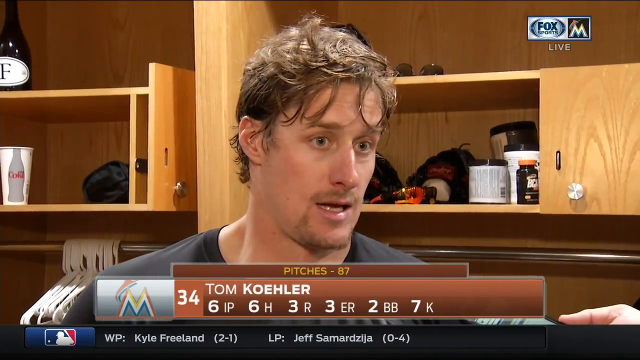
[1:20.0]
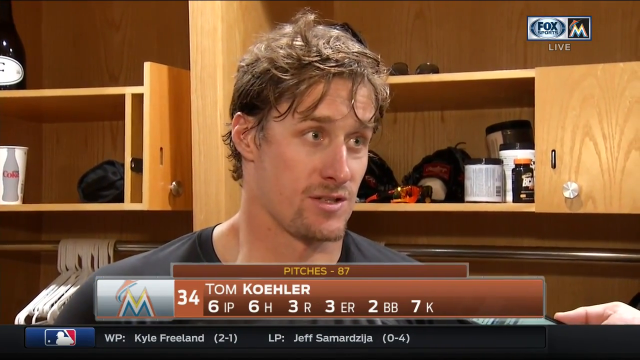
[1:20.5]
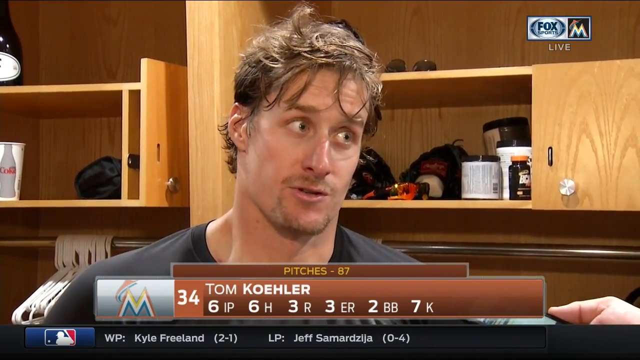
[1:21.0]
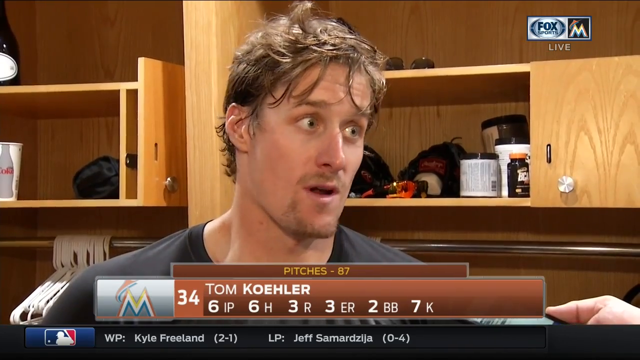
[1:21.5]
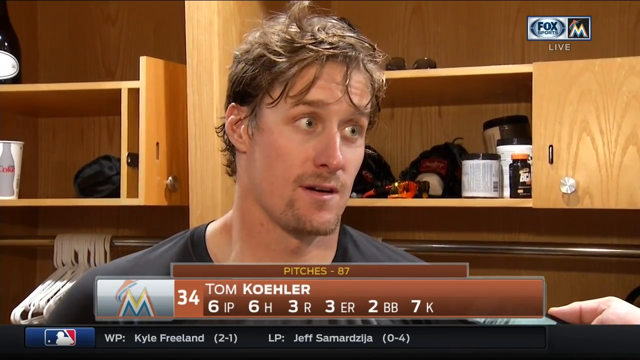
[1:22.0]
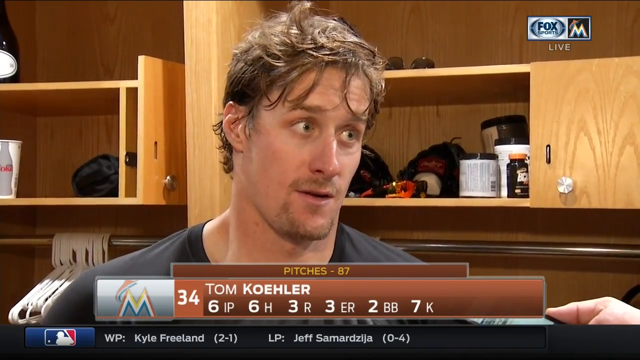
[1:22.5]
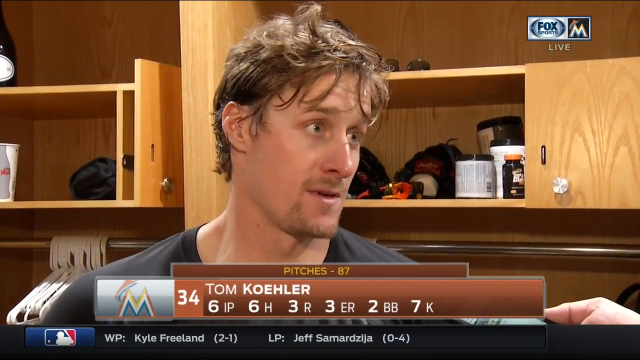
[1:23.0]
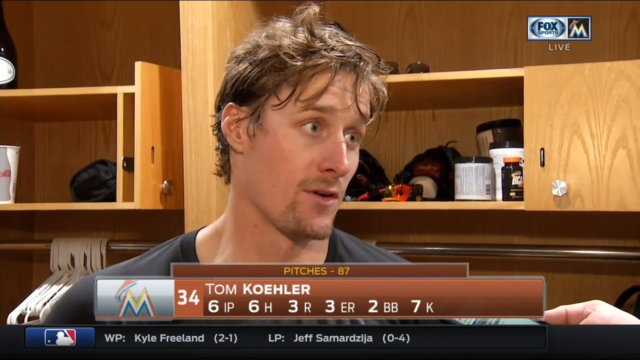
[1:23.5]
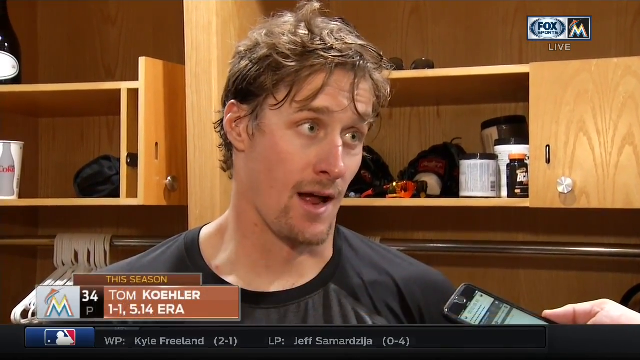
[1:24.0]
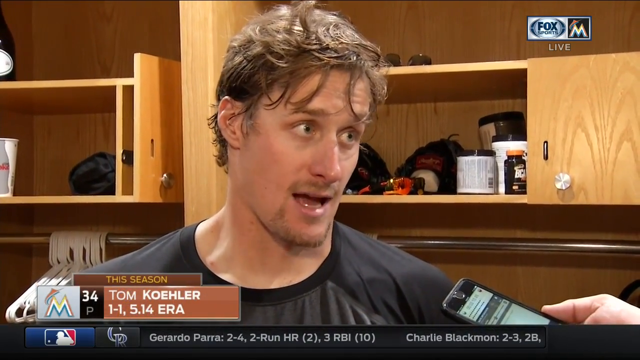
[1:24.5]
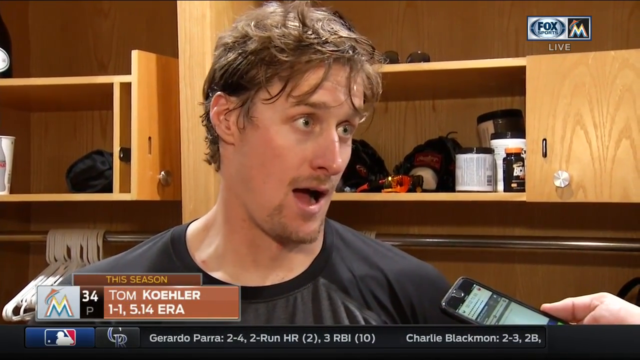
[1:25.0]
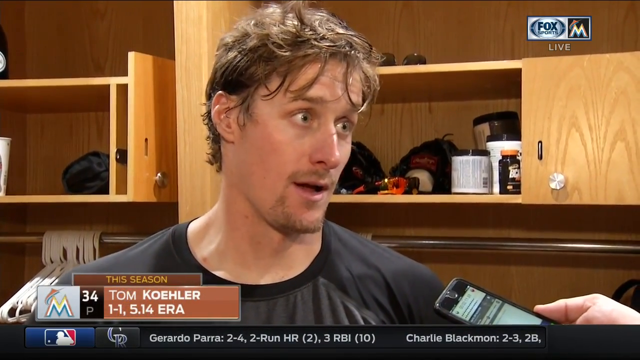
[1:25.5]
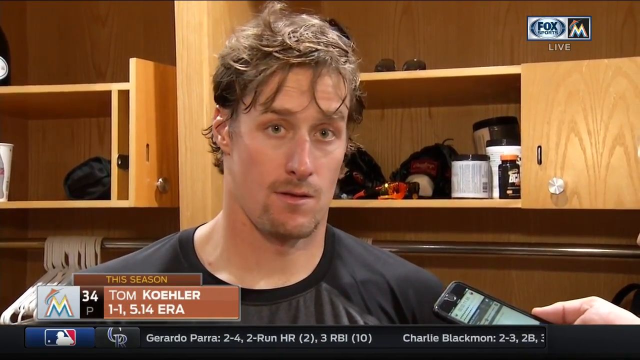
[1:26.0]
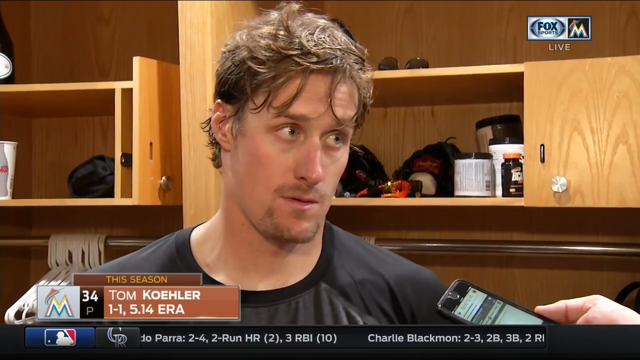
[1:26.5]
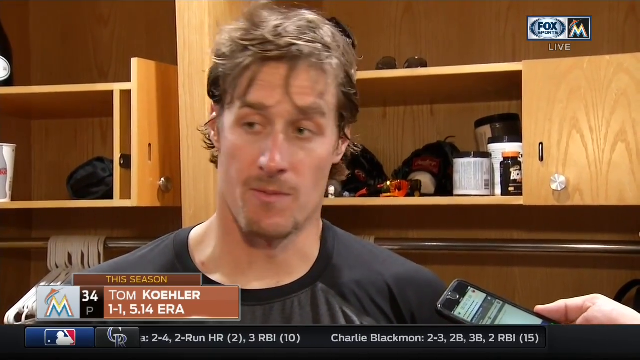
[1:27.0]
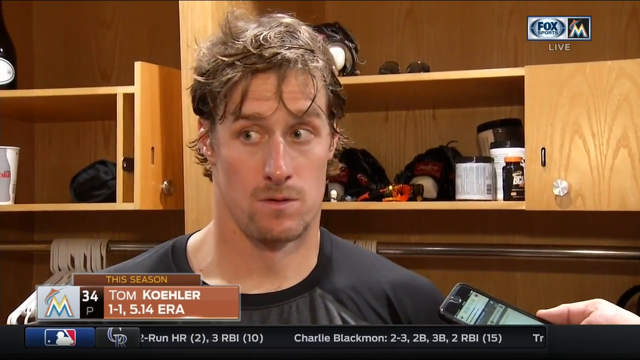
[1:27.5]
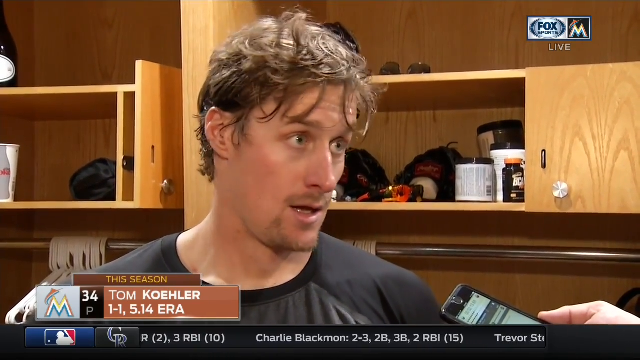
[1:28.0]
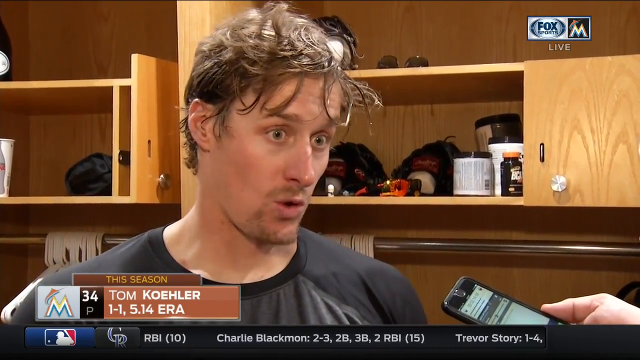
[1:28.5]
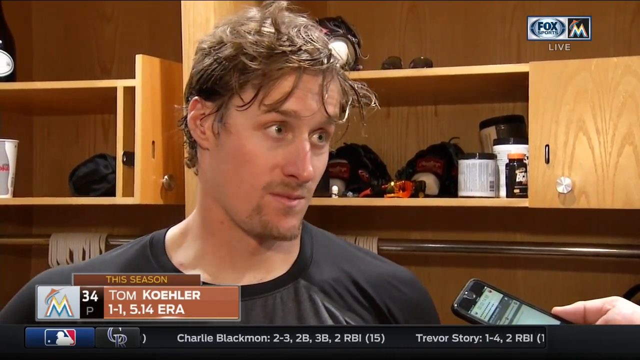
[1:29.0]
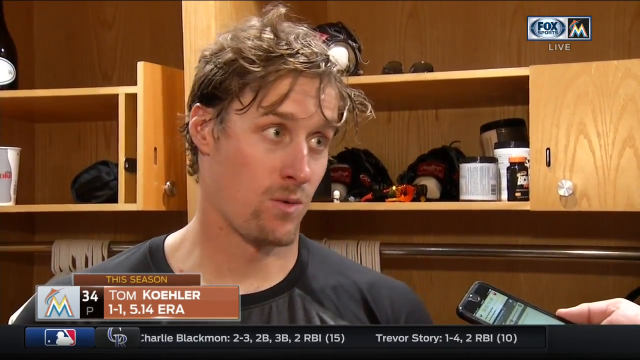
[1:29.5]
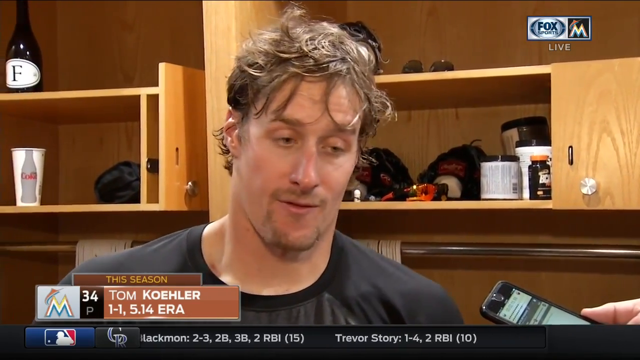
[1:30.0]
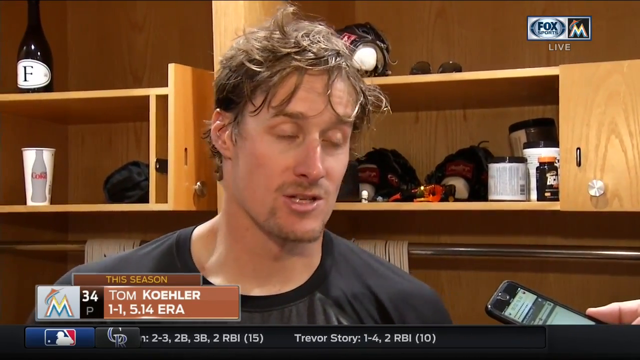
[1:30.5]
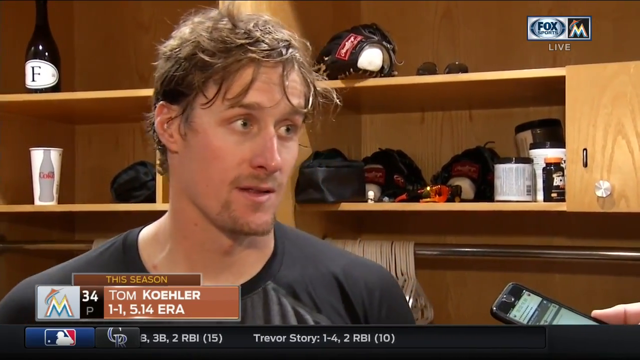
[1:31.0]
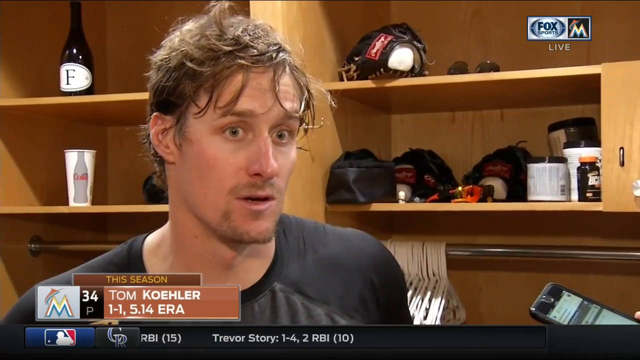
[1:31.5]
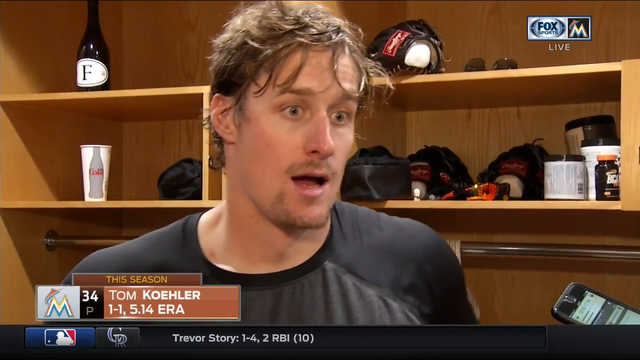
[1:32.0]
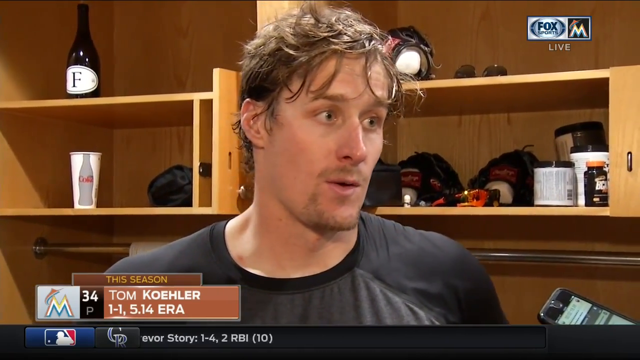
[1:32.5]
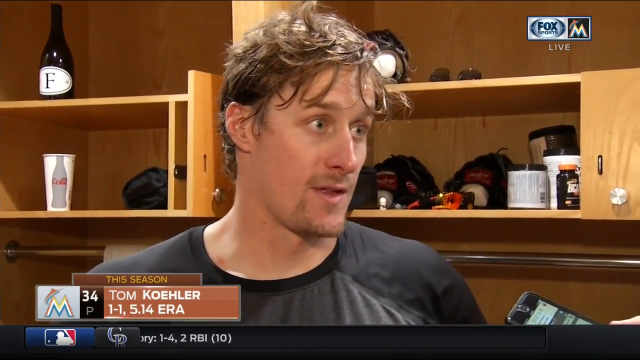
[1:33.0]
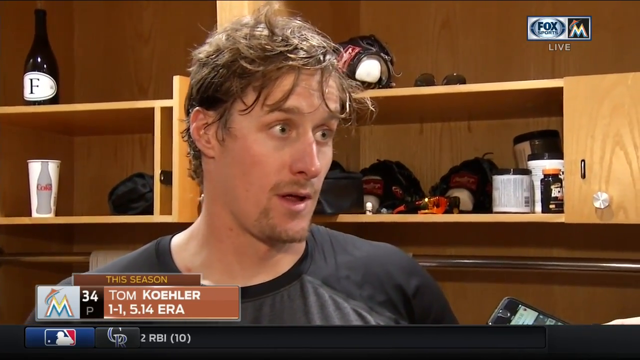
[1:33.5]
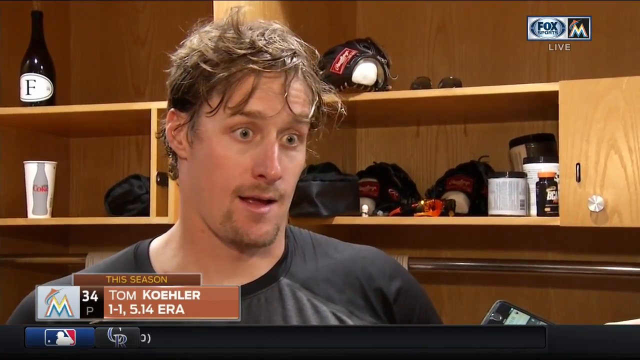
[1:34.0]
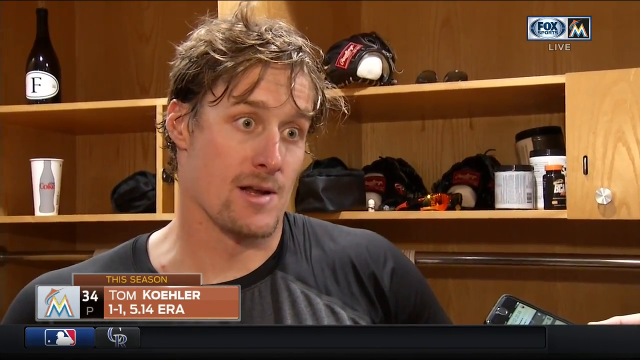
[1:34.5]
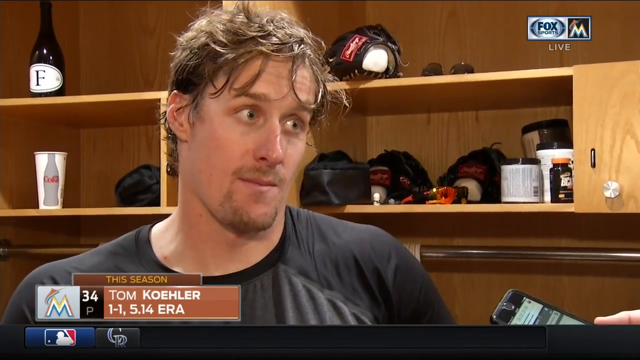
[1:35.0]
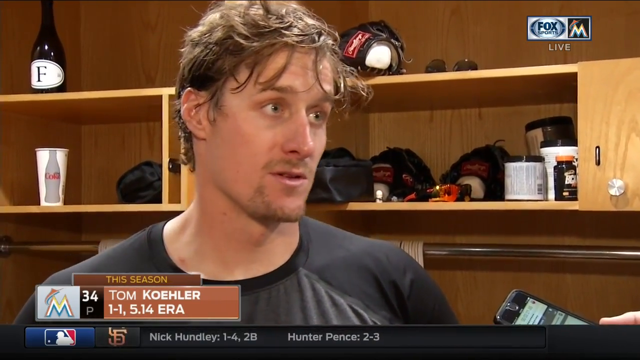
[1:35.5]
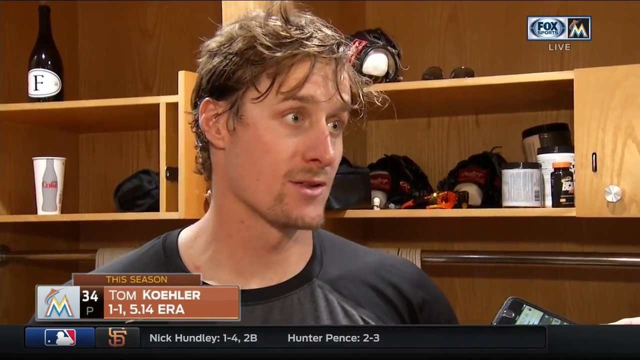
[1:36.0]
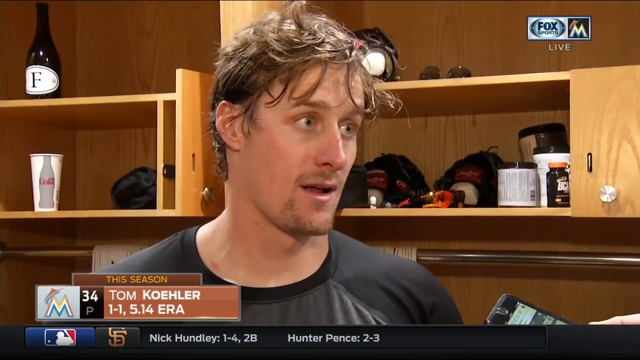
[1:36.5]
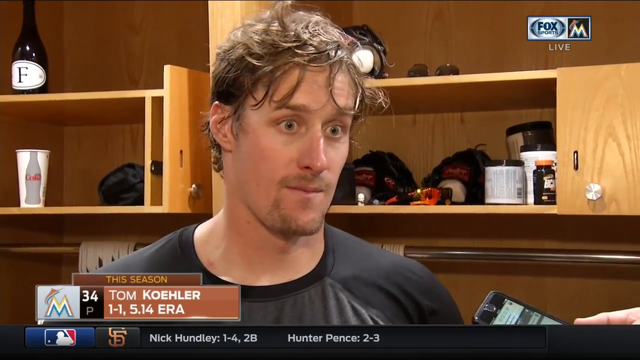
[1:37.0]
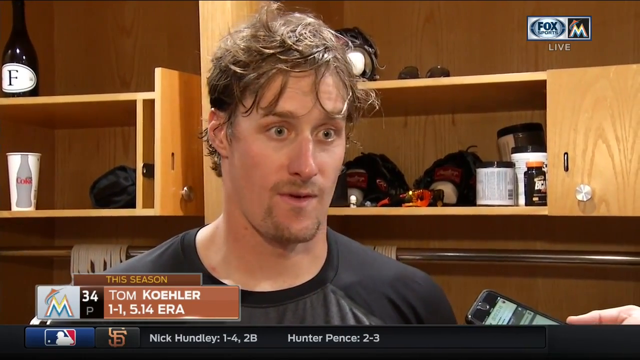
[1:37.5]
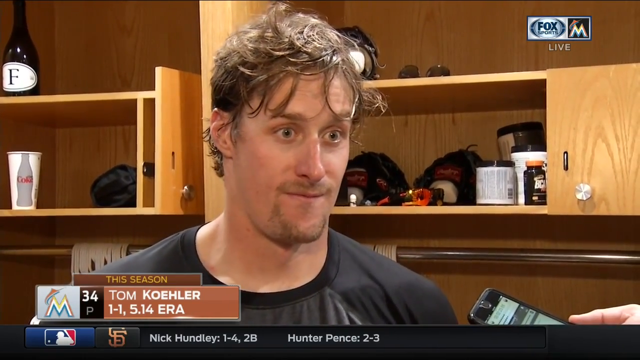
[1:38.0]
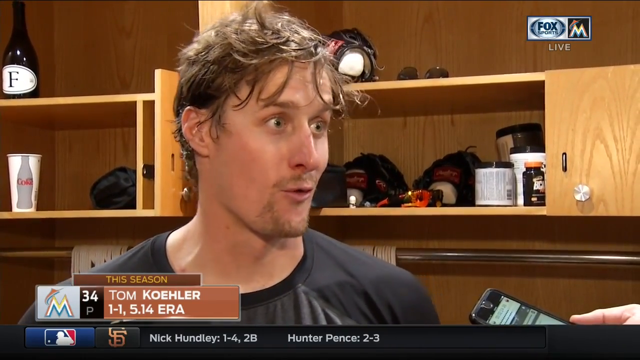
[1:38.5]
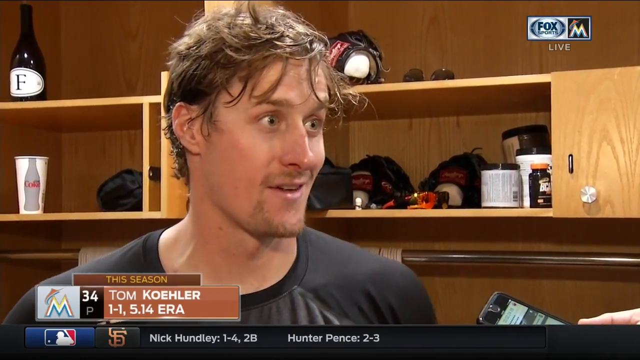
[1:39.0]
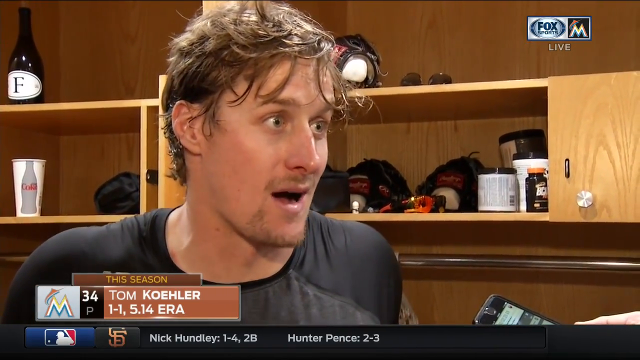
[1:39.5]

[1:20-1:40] He addresses the reporter holding the cell phone on the right directly, shaking his head a lot, apparently shaking it no throughout his explanation. It looks like he may be explaining some difficulty during the game, though this is unclear. His hair is messed up, as if he just took off his cap, and he has kind of a goatee that looks like maybe a few days to a week of growth. The statistics are still up, now also showing his record, 1 and 1, and ERA, 5.14. Below that, a ticker running from right to left shows information about other games and scores, including Nick Hundley going one and four with a double. The ticker is hard to read because the video's timer gets in the way.